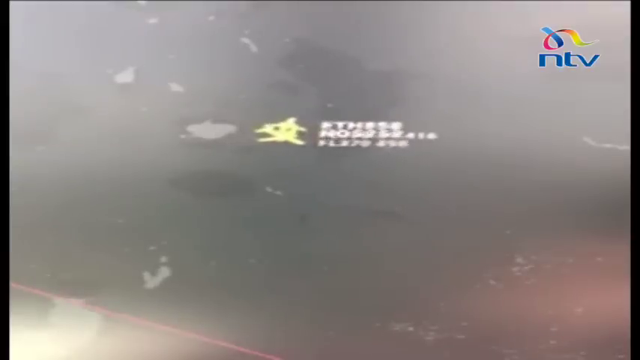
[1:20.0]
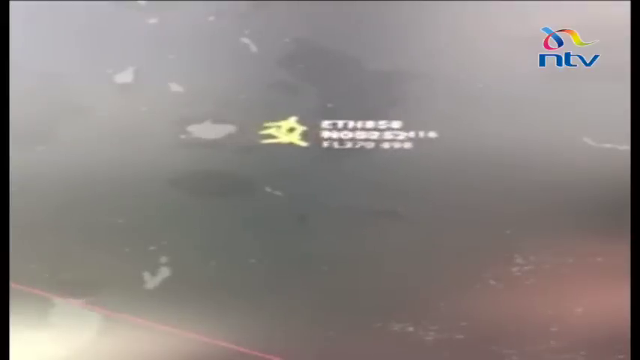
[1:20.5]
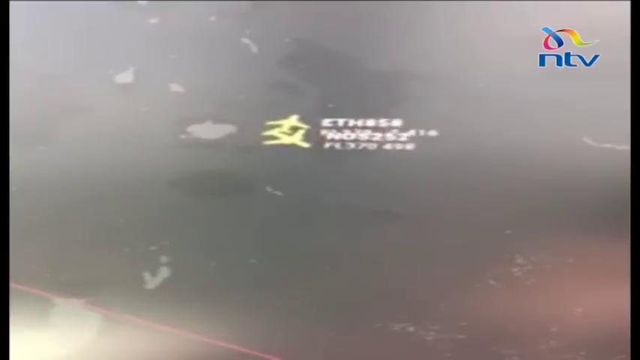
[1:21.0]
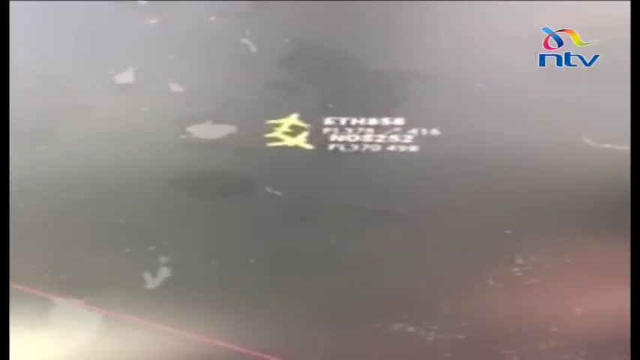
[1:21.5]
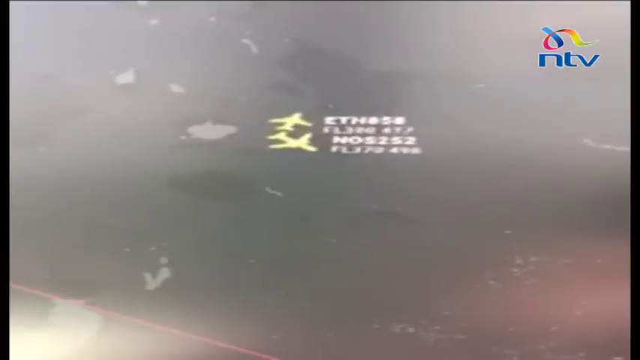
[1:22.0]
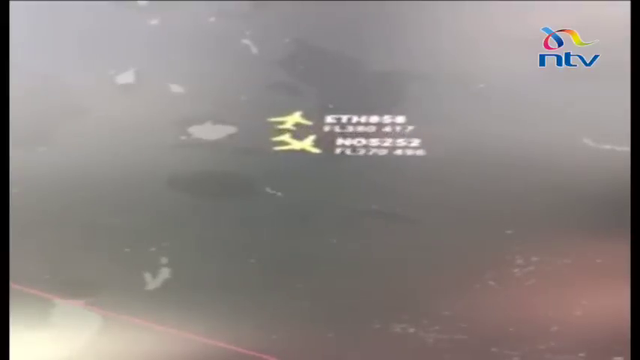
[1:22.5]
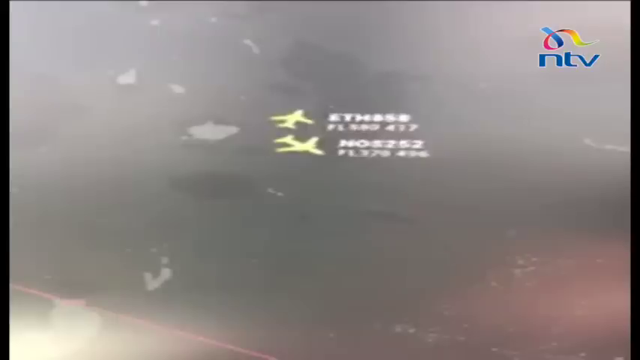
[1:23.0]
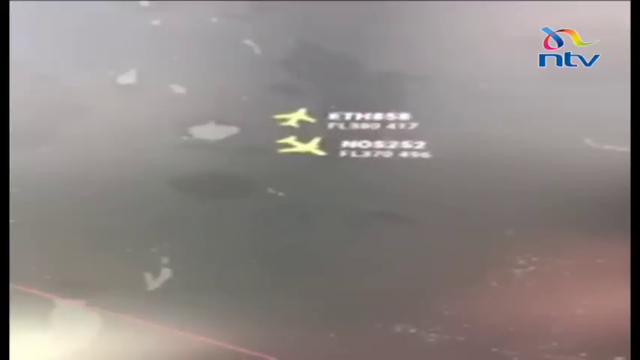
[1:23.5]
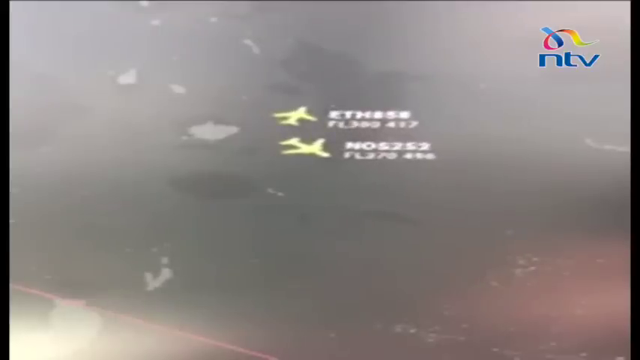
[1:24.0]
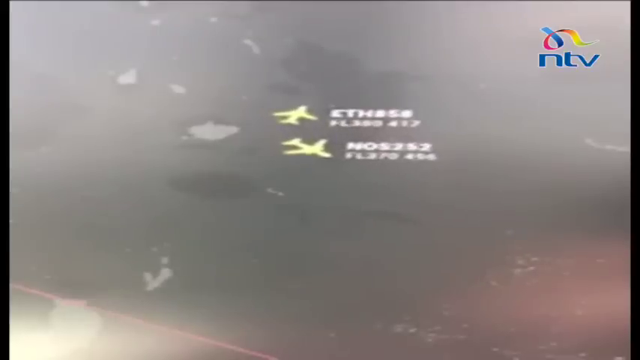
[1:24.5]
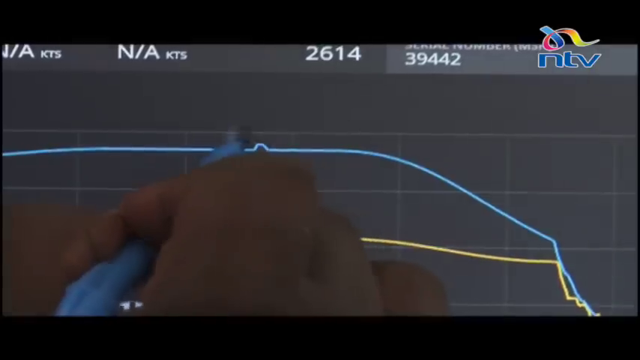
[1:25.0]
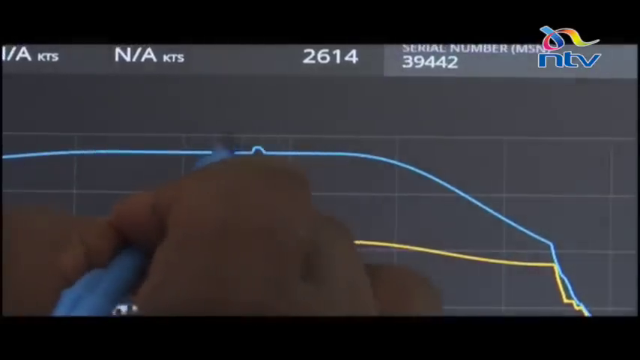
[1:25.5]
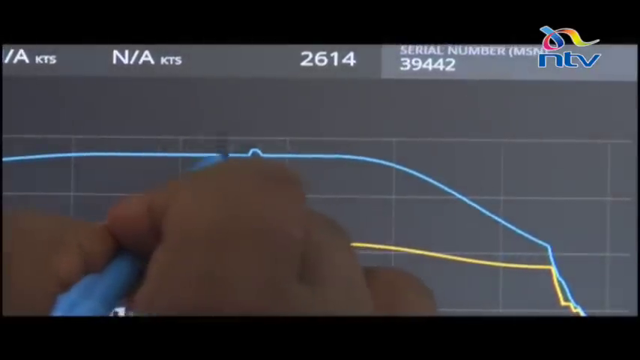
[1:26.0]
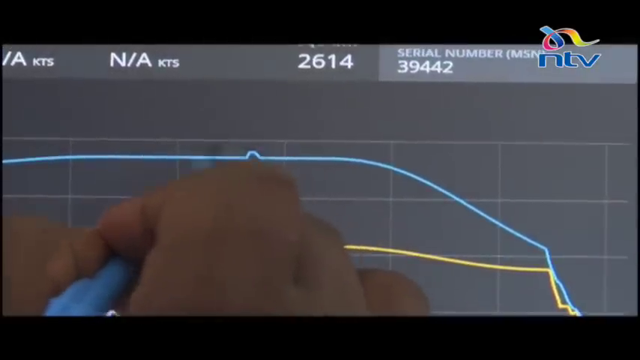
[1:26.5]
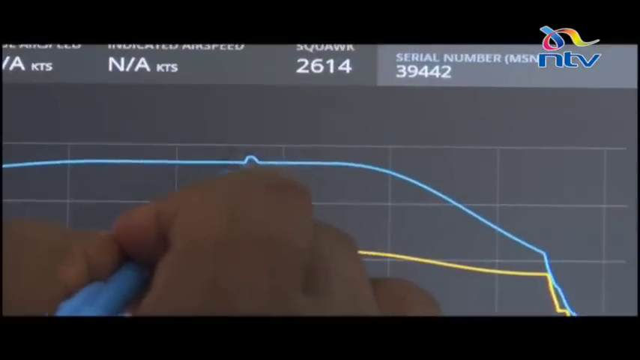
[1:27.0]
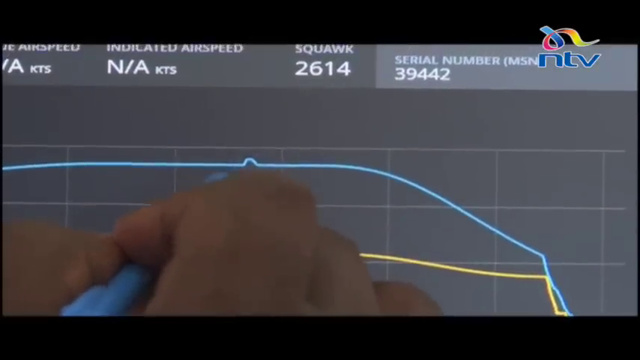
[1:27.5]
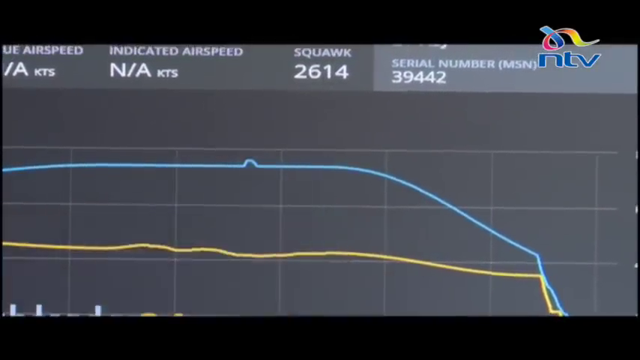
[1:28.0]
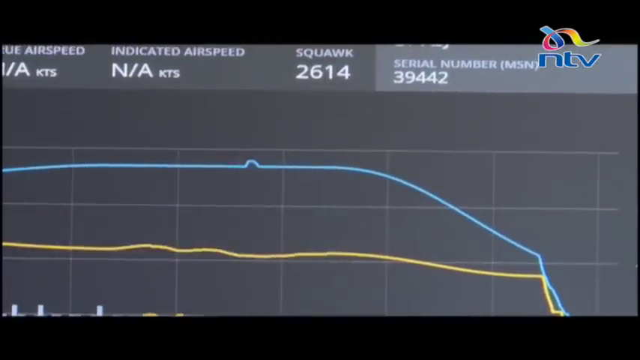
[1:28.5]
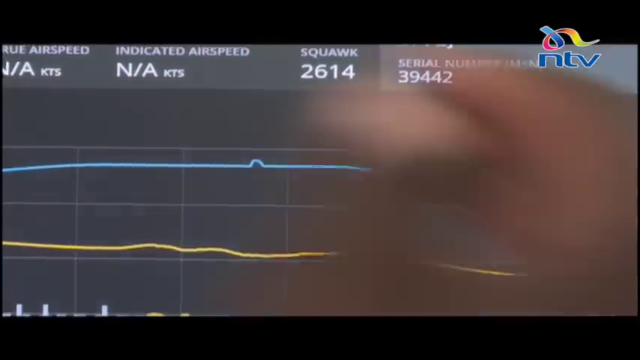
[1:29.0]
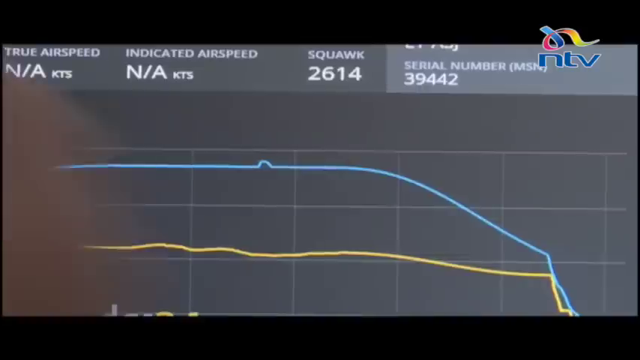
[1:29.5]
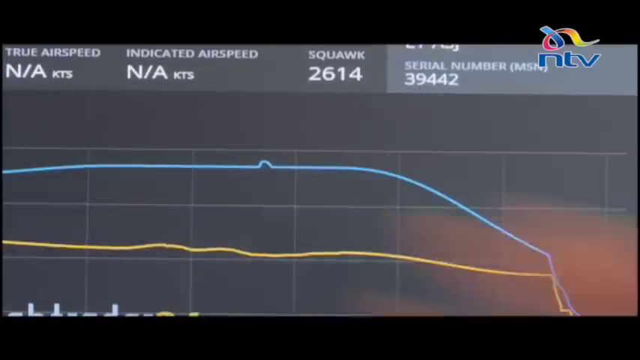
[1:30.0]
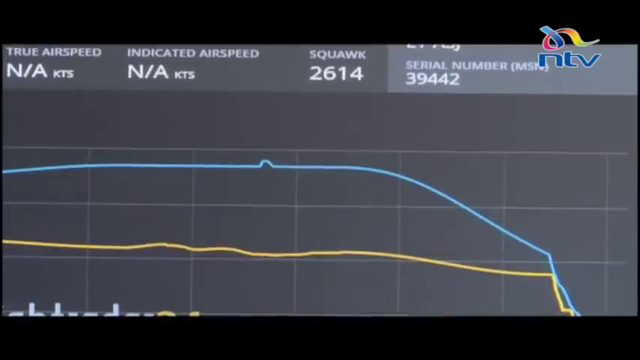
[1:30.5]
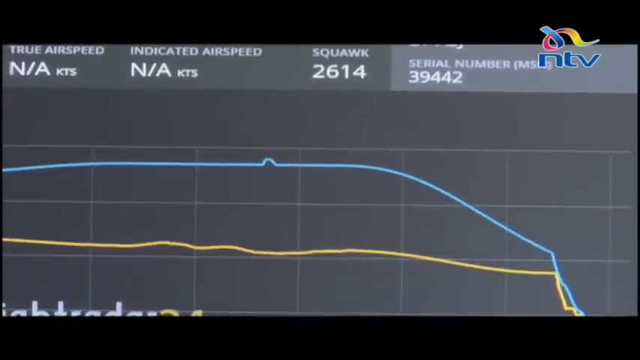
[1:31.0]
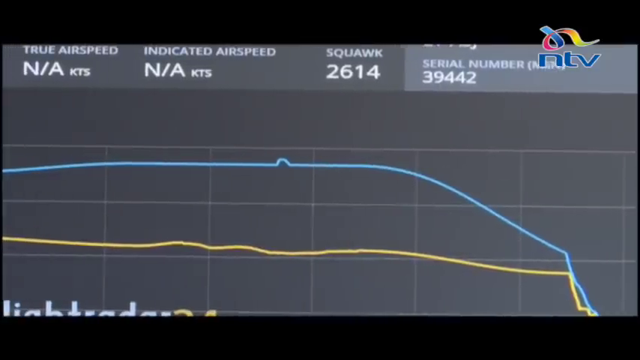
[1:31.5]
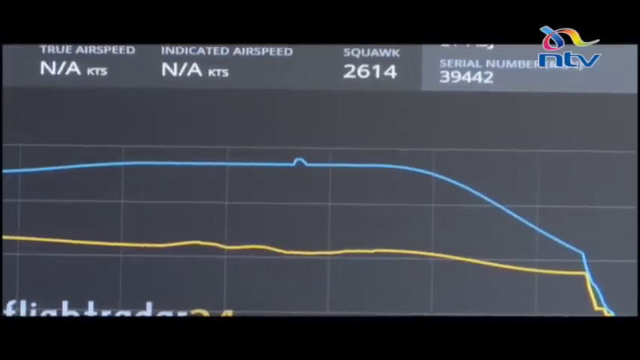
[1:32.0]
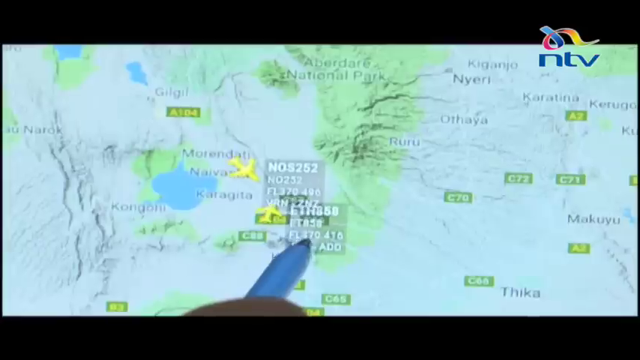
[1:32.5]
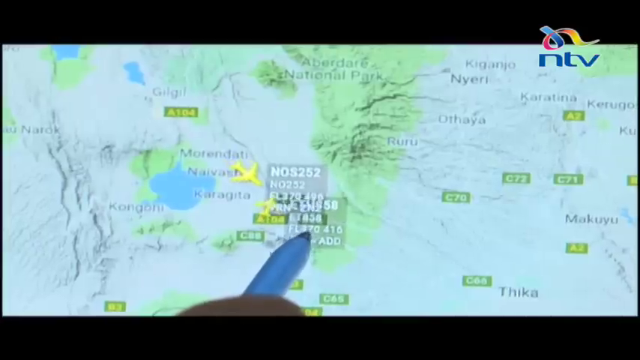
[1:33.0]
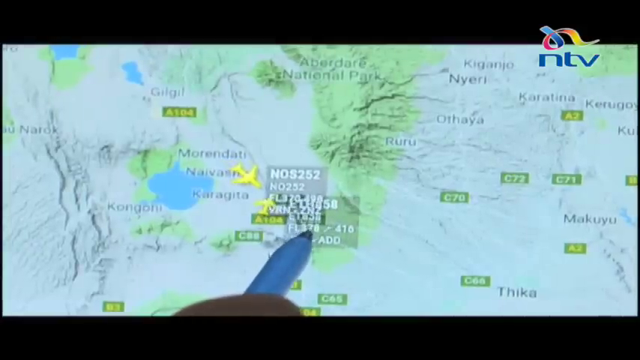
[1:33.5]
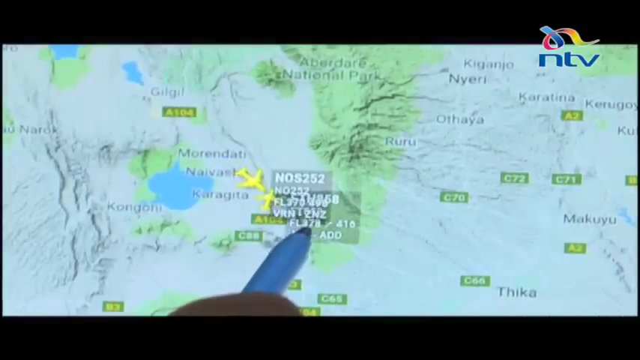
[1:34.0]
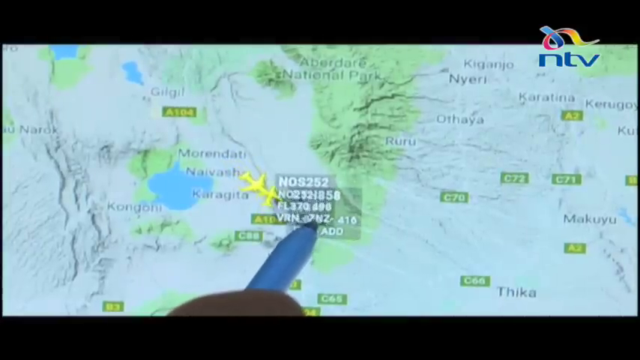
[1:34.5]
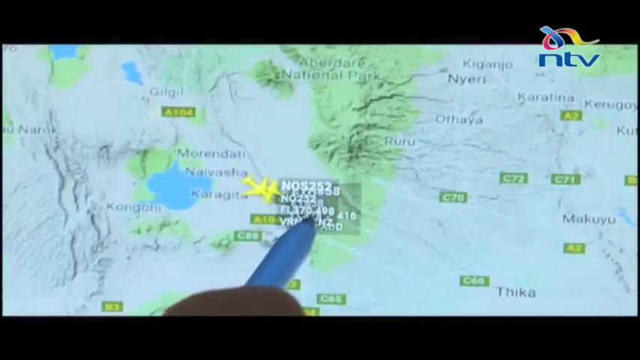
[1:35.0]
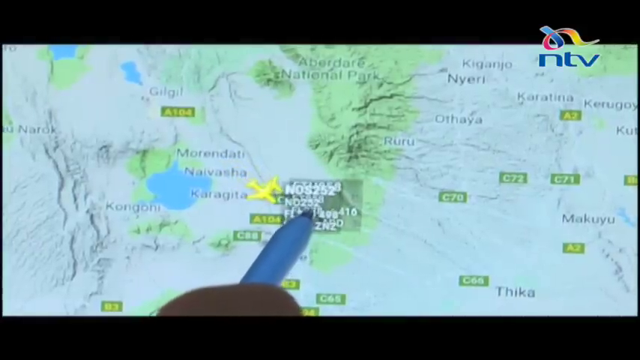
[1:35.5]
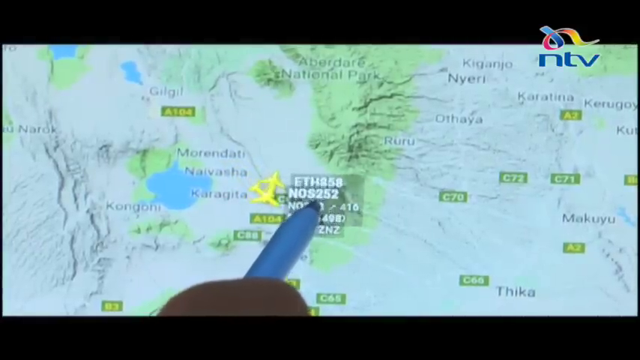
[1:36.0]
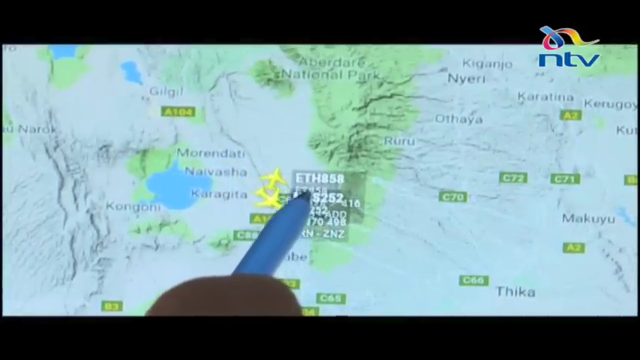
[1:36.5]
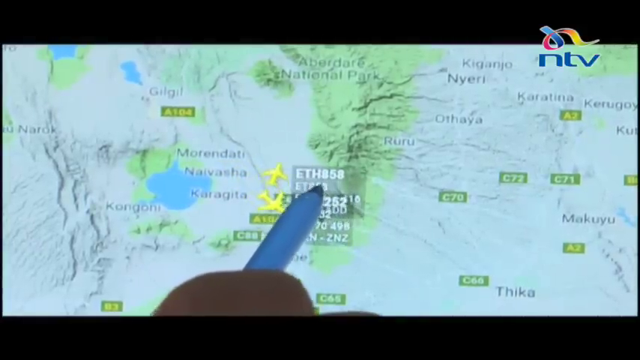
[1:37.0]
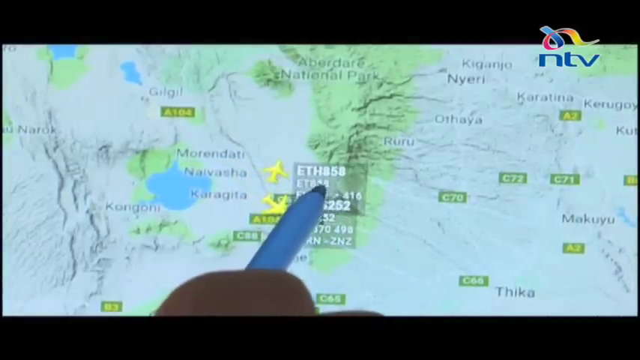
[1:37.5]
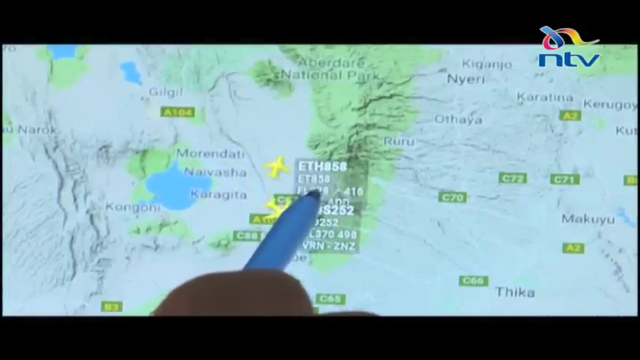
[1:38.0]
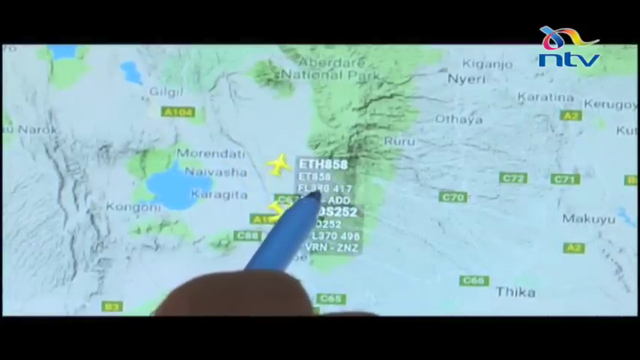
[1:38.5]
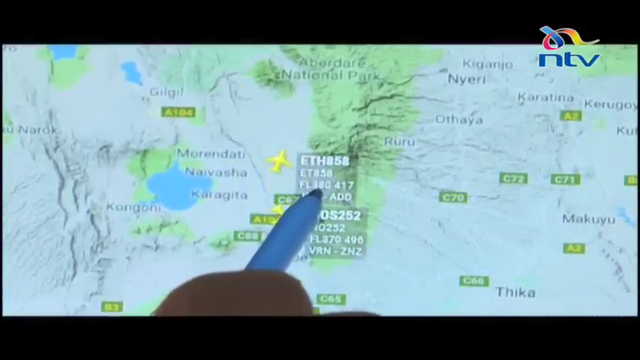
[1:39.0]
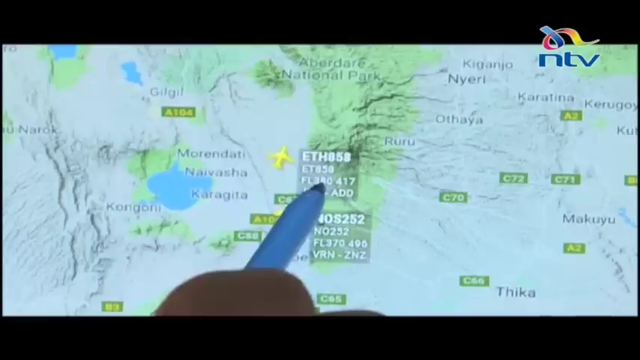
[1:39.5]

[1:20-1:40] Two yellow planes start together in one place and, as time goes on, separate in two directions, one going up and the other going down. Next, a graph is on the screen, and a person's hand points at a green part of the graph with a powder blue pen, moving the pen along it. On the map, the two yellow planes are in different positions and look like they are coming together to meet.